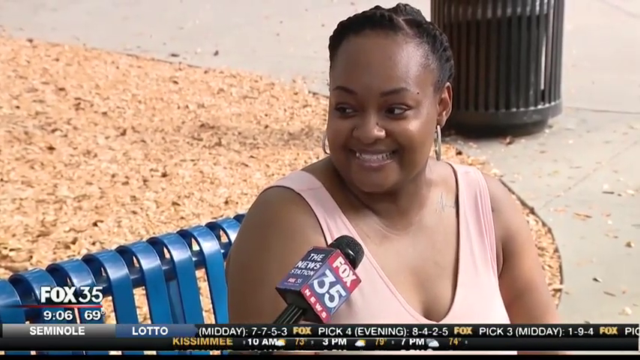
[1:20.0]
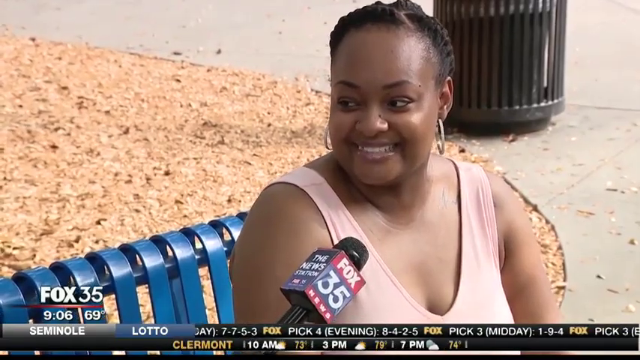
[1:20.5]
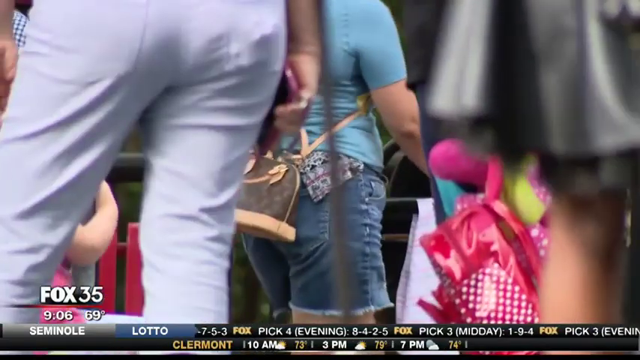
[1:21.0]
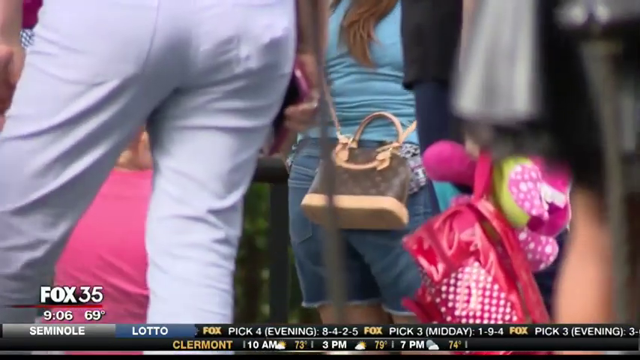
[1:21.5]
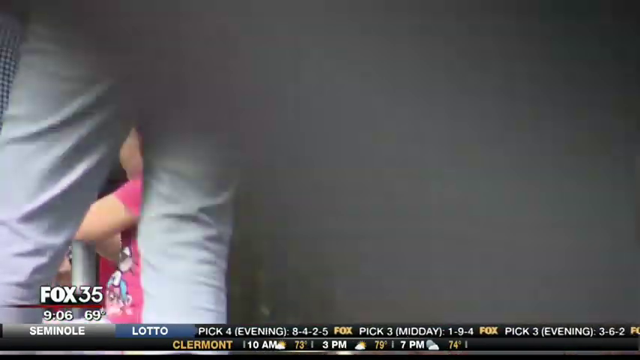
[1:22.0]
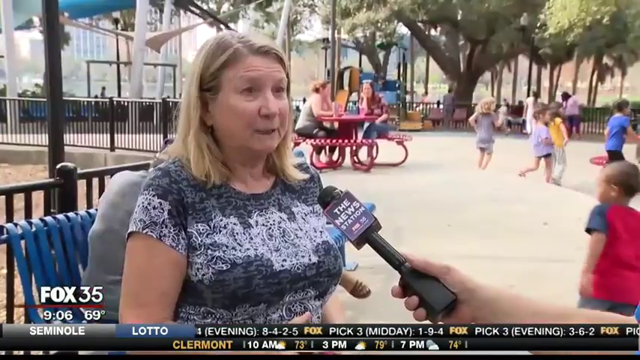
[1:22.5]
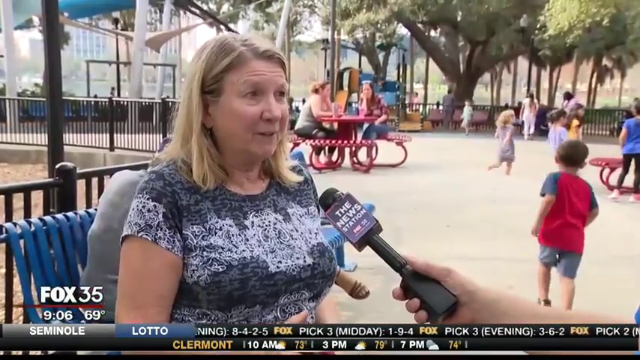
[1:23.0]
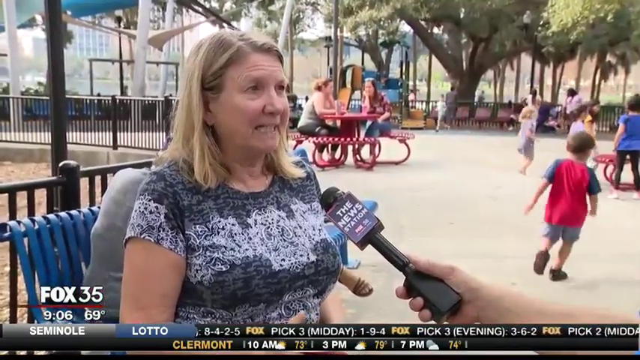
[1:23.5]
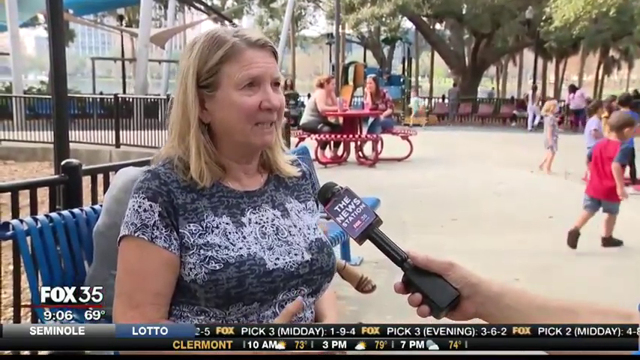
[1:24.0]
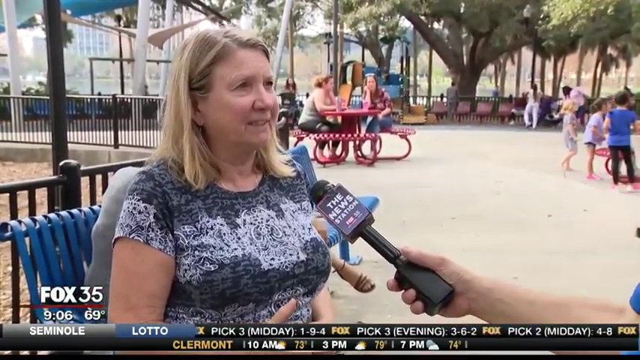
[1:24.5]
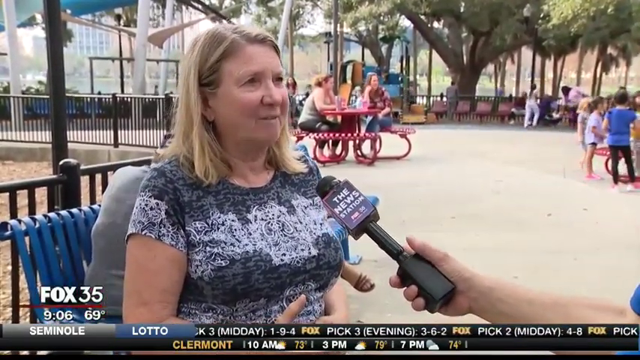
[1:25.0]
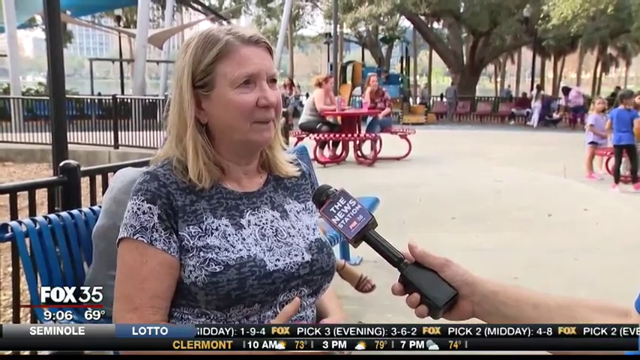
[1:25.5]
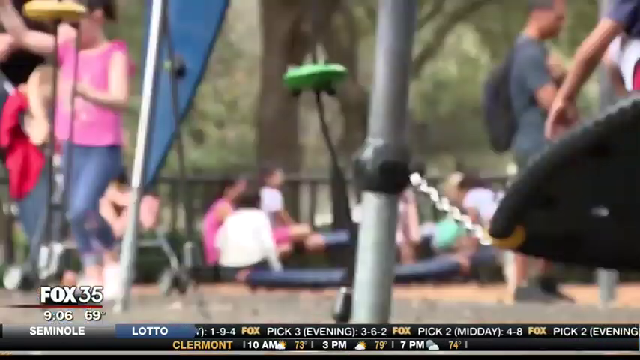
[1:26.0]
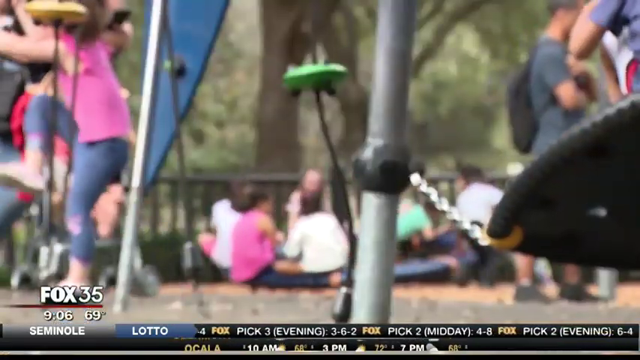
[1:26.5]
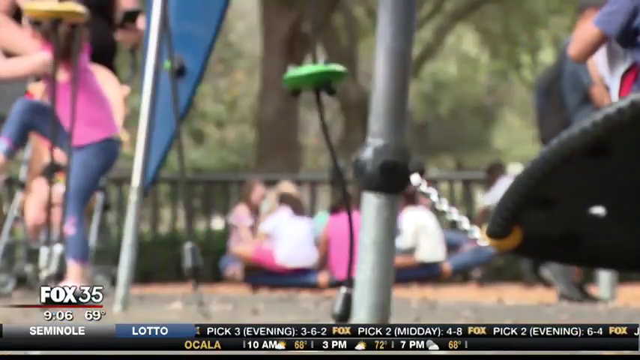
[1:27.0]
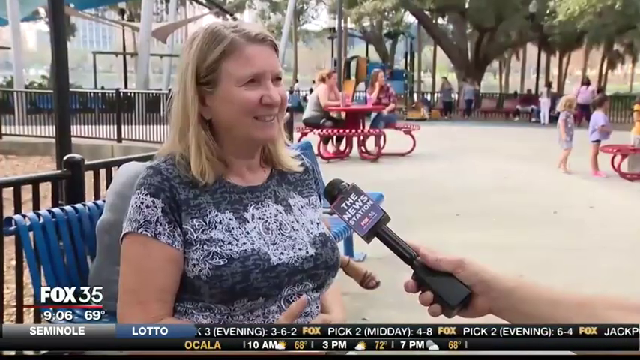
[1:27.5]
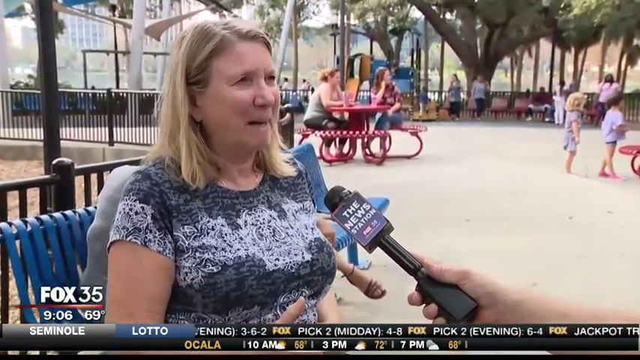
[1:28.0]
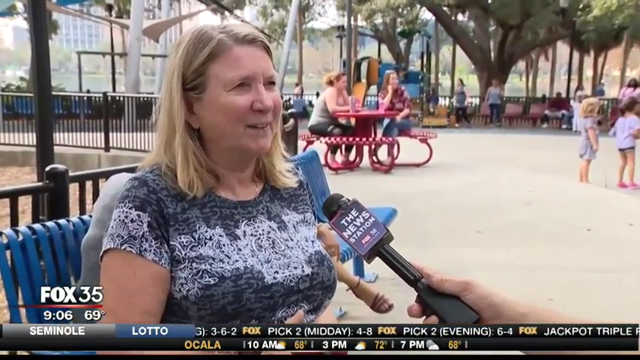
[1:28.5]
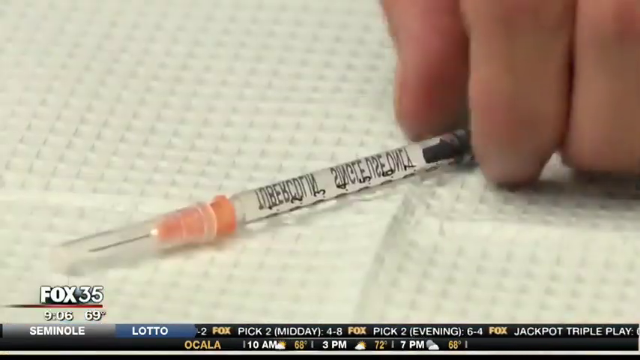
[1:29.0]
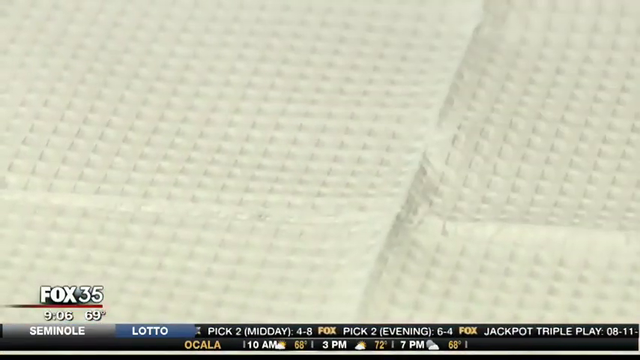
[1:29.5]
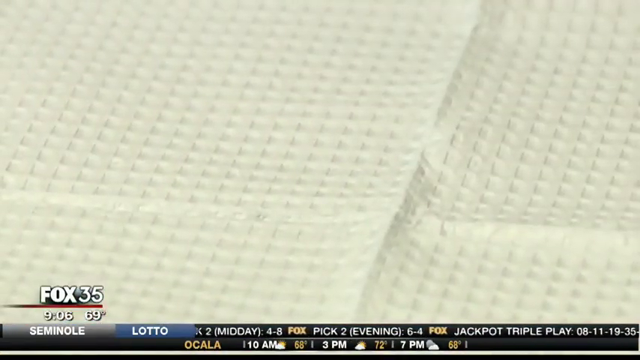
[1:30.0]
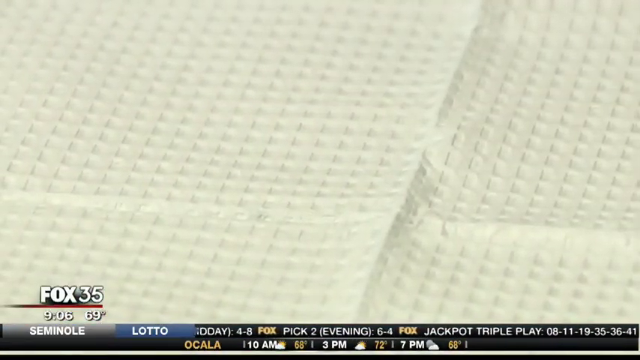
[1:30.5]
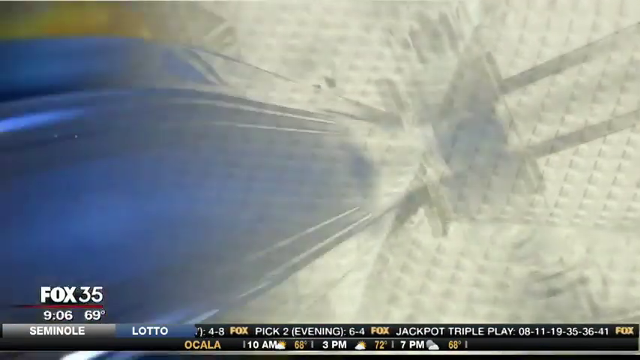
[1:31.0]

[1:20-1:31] The African American woman in the pink tank top sits on the blue park bench, speaking to the camera. The shot switches to an anonymous view of people walking through the park, showing only their backs or below their waists. Then the older white woman in the goth-style shirt is interviewed by the newscaster. A very quick cut shows a slightly blurry scene of children playing in the park, then cuts right back to the white woman speaking into a microphone coming out of a hand from the right side of the screen. Finally, a close-up shows somebody picking up a hypodermic needle filled with medicine from a paper towel.